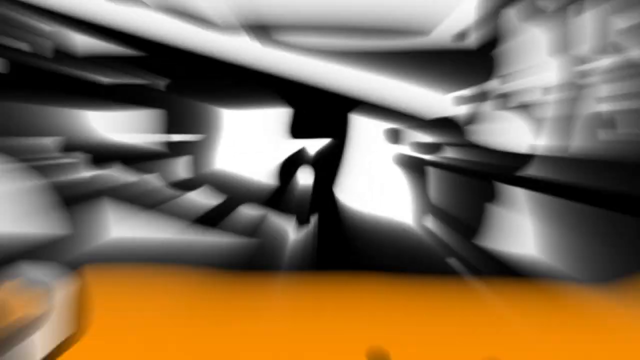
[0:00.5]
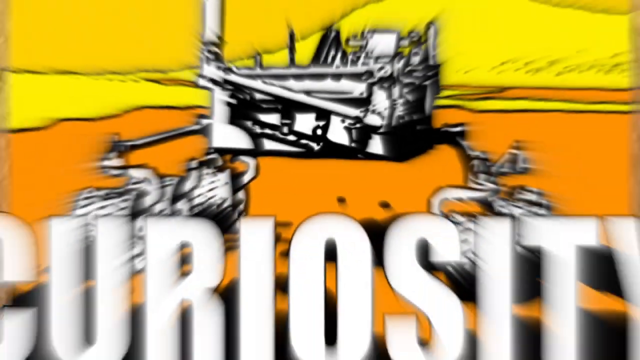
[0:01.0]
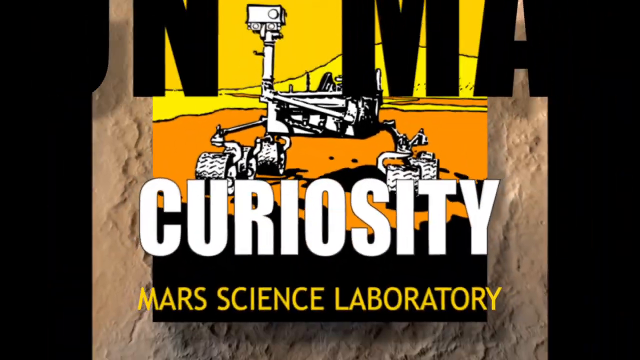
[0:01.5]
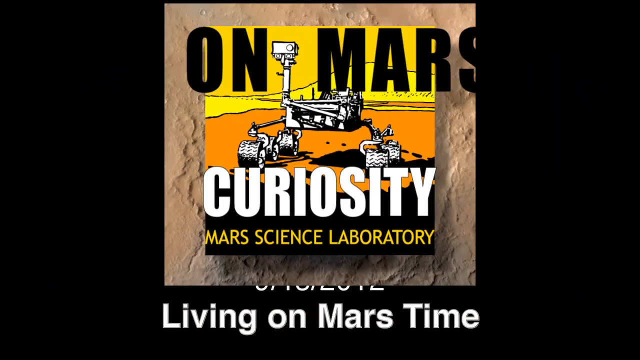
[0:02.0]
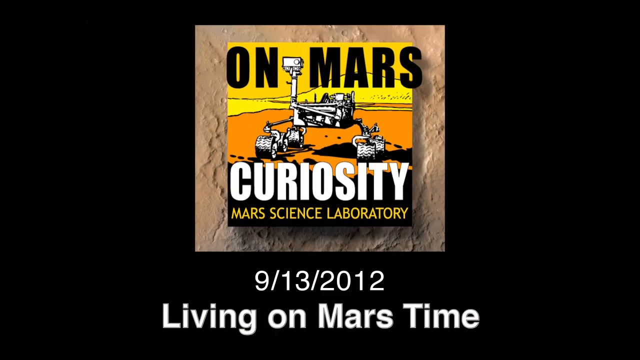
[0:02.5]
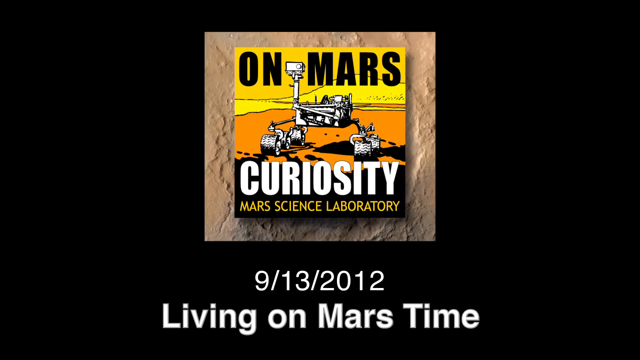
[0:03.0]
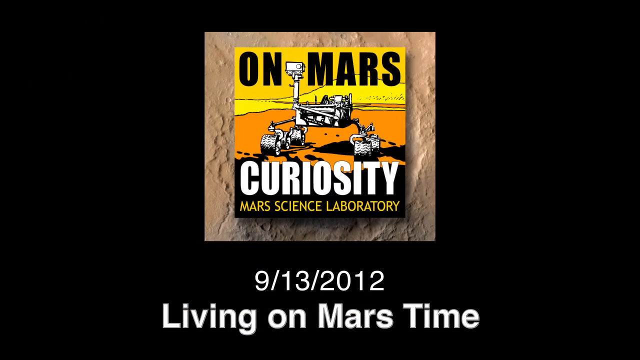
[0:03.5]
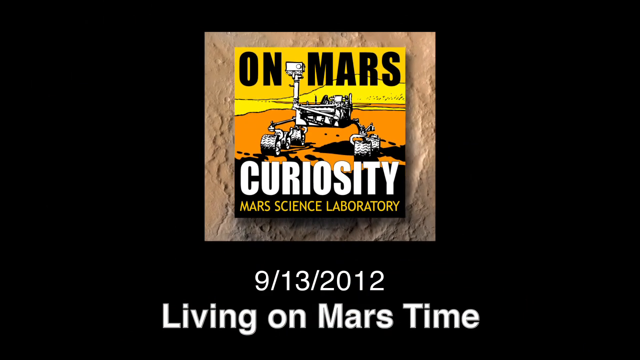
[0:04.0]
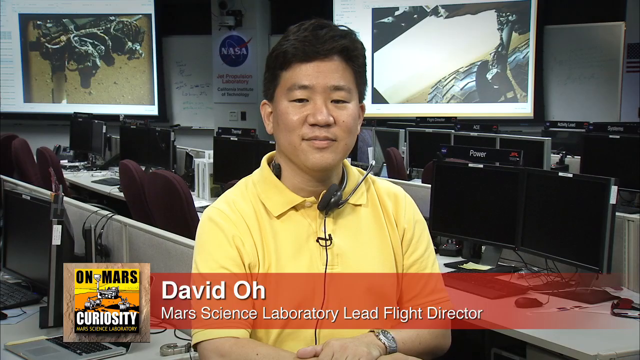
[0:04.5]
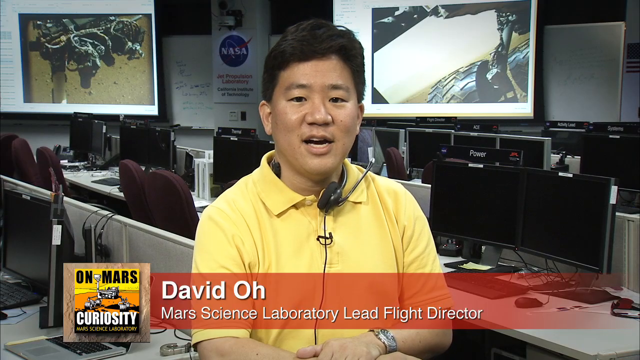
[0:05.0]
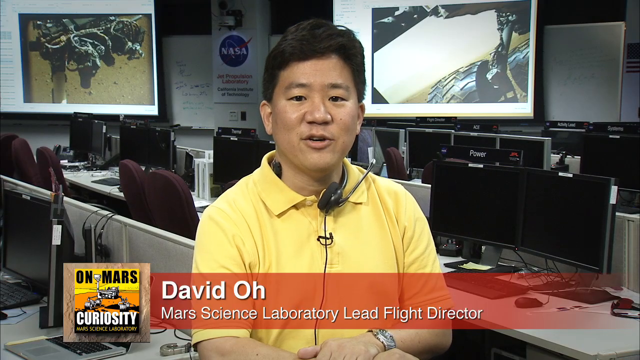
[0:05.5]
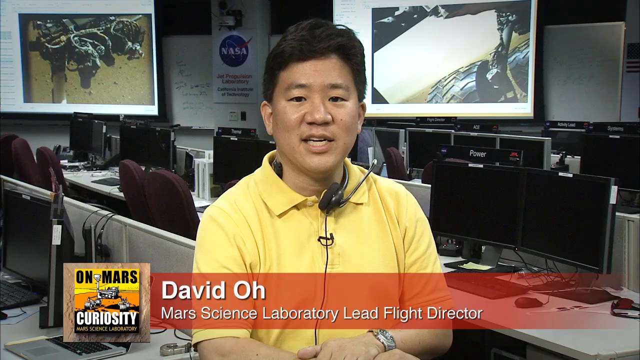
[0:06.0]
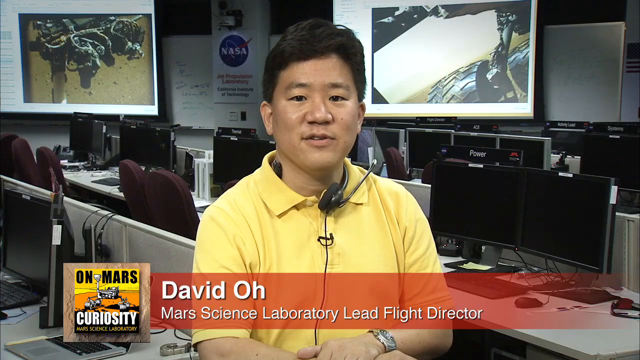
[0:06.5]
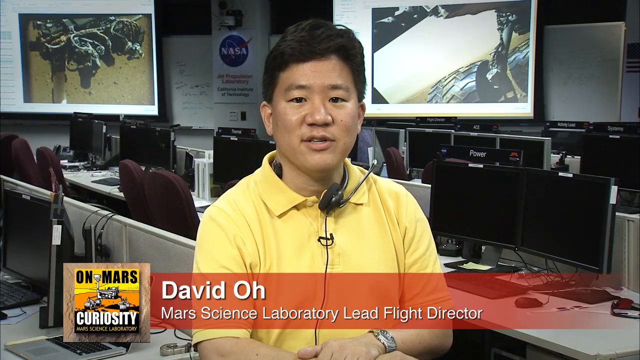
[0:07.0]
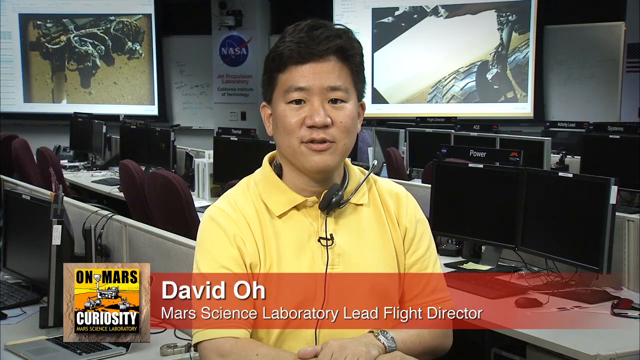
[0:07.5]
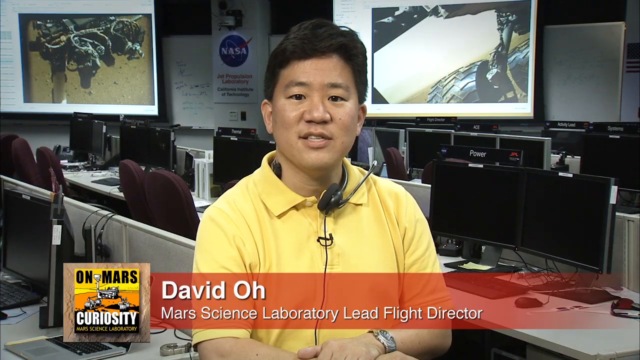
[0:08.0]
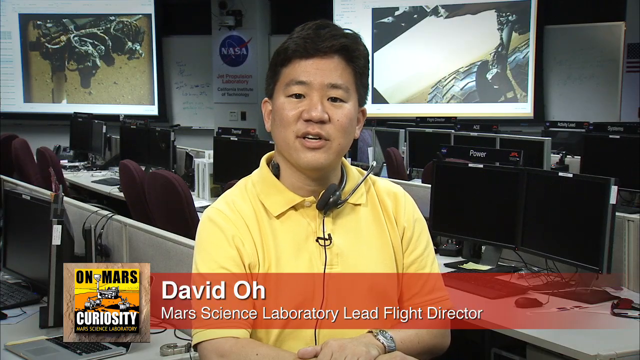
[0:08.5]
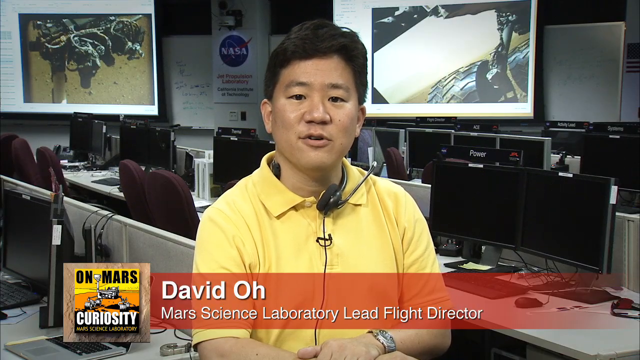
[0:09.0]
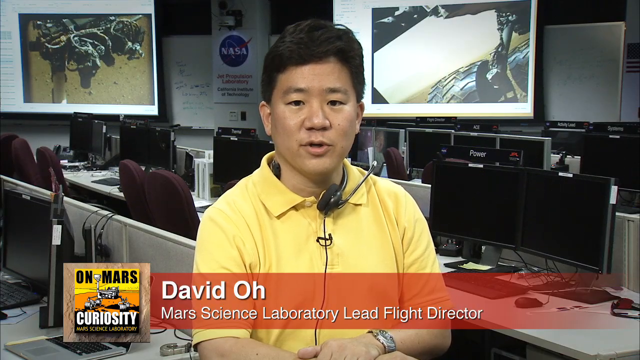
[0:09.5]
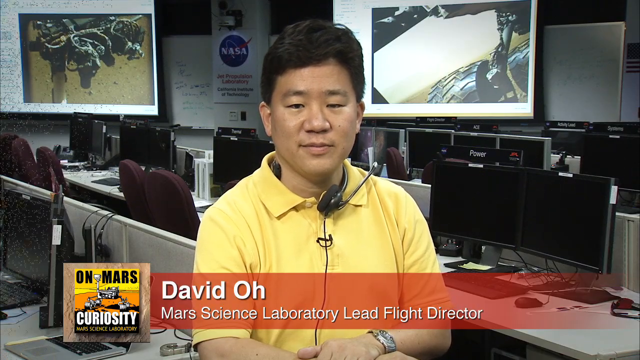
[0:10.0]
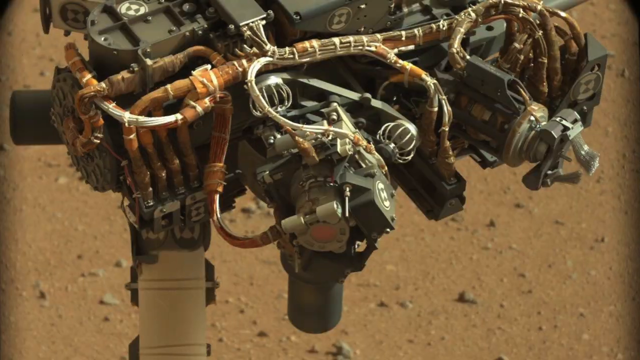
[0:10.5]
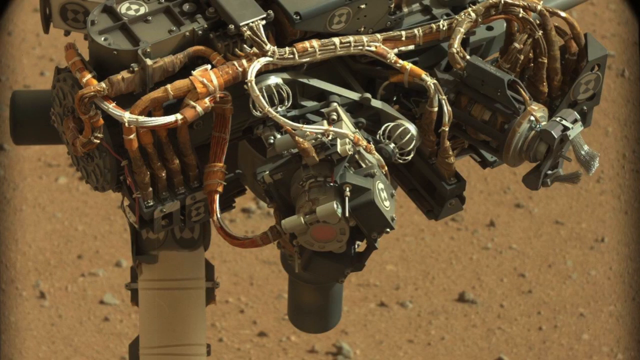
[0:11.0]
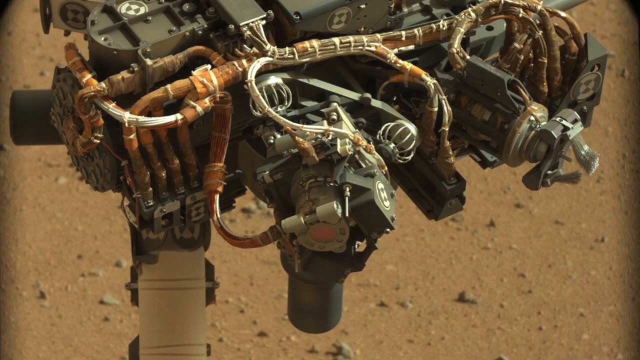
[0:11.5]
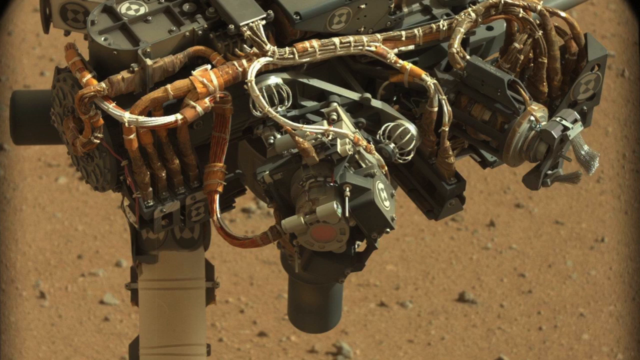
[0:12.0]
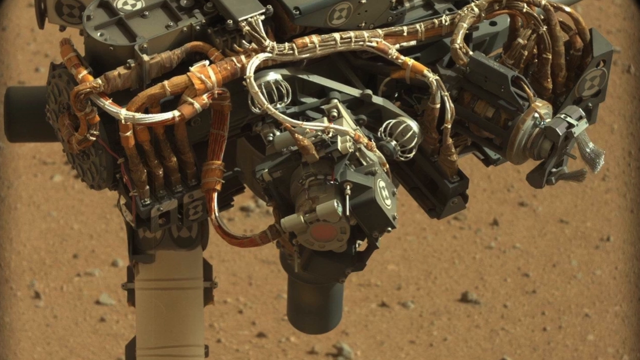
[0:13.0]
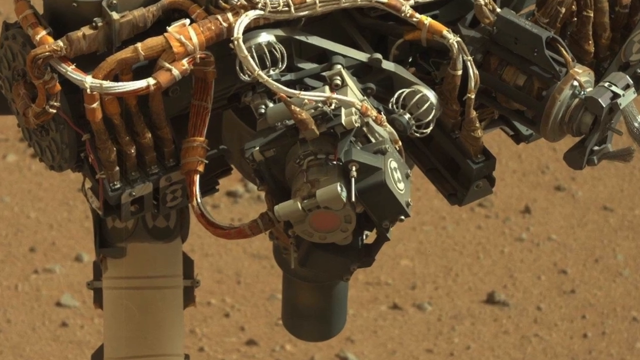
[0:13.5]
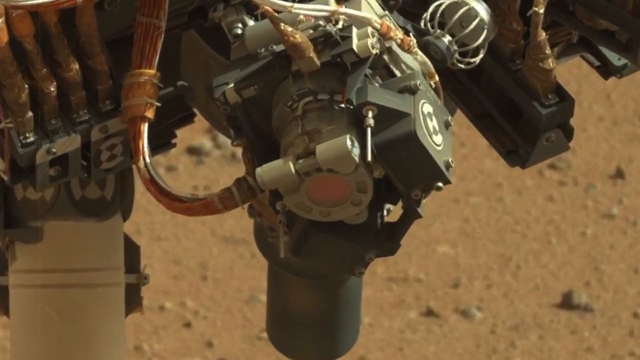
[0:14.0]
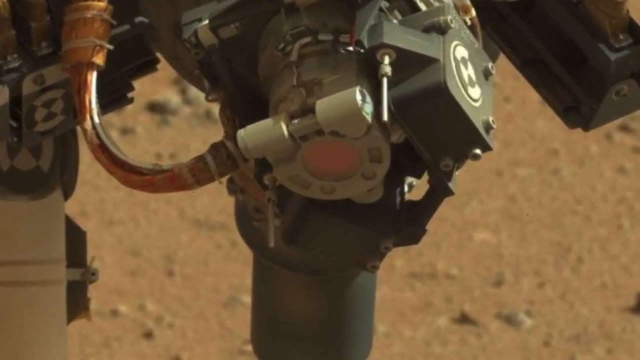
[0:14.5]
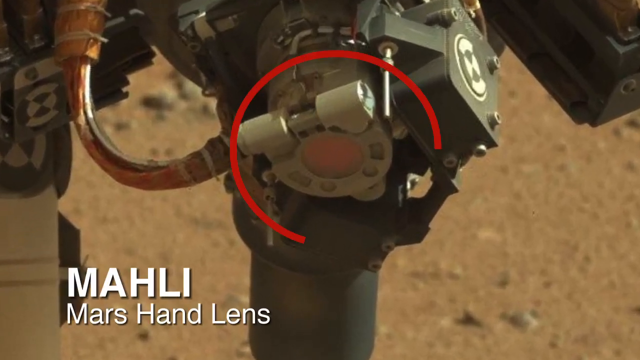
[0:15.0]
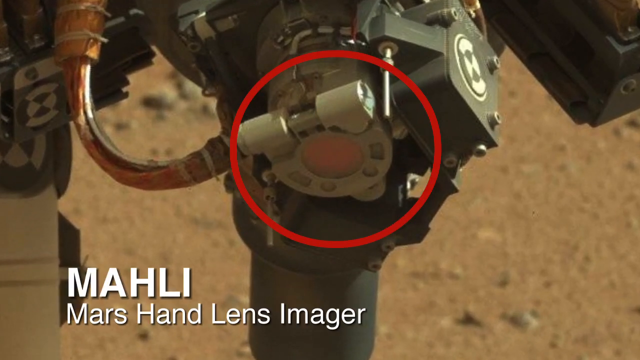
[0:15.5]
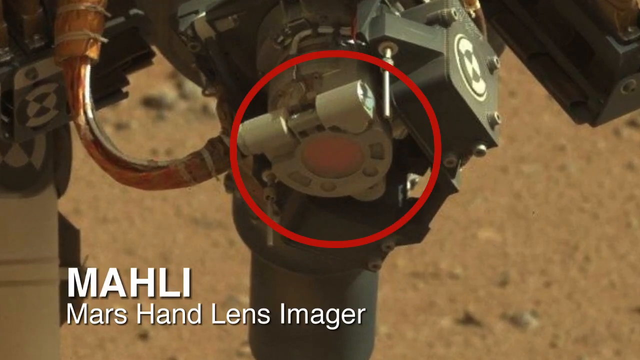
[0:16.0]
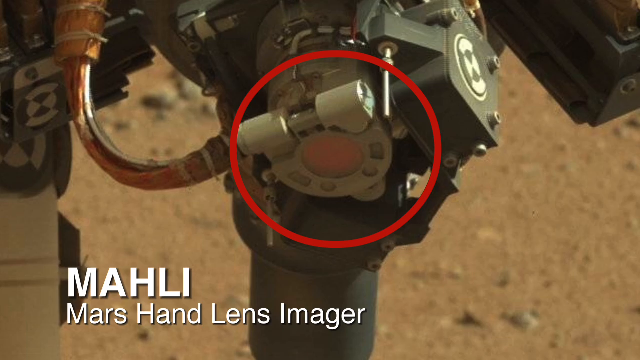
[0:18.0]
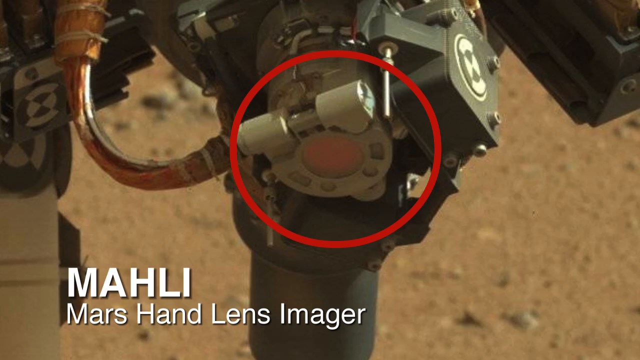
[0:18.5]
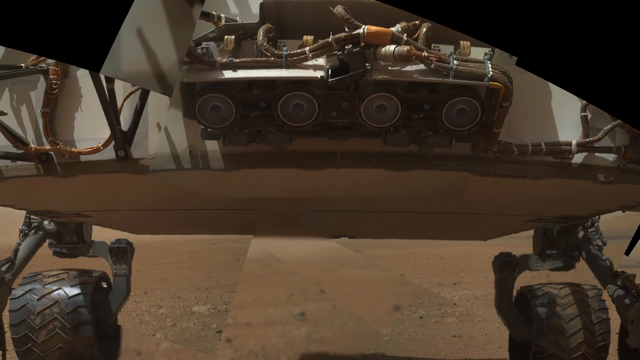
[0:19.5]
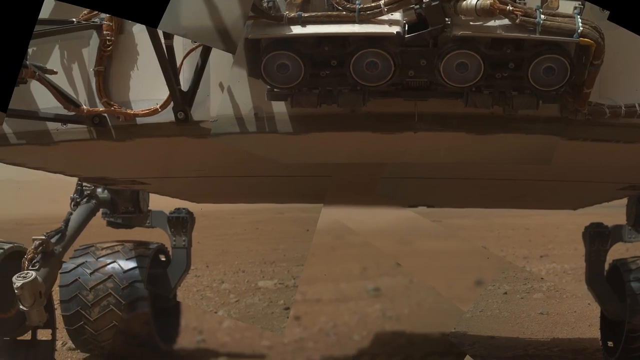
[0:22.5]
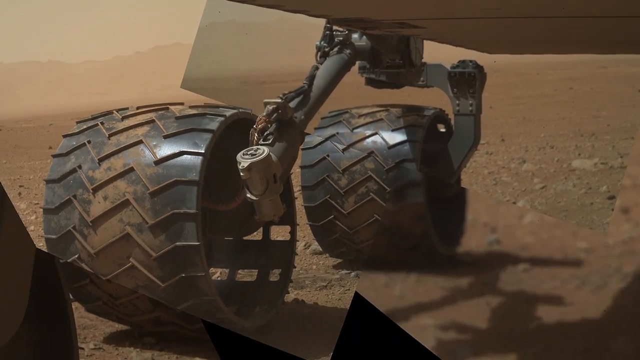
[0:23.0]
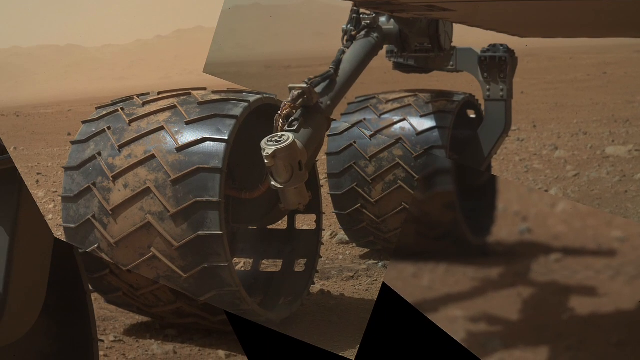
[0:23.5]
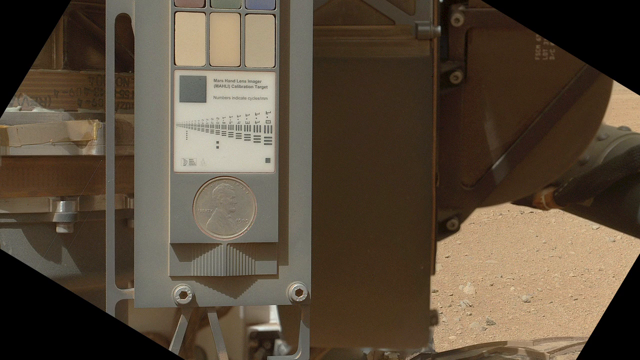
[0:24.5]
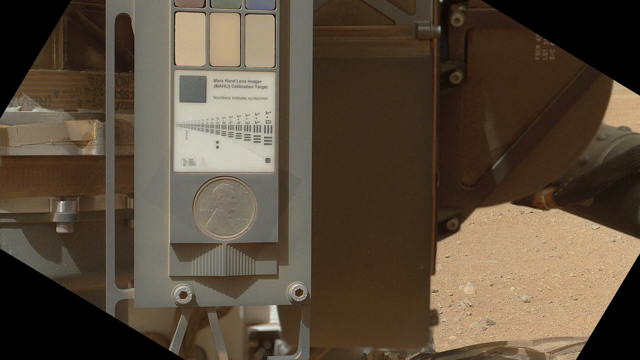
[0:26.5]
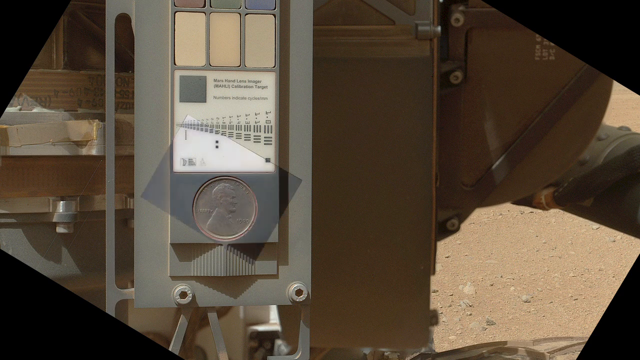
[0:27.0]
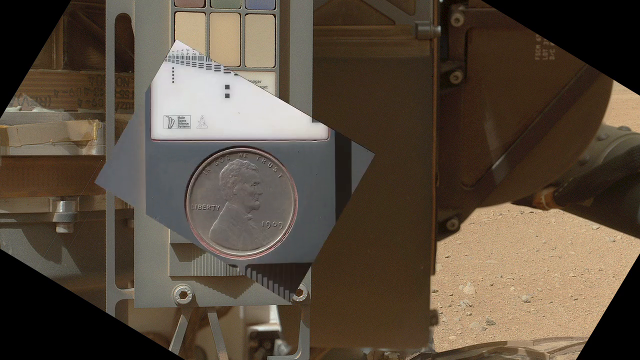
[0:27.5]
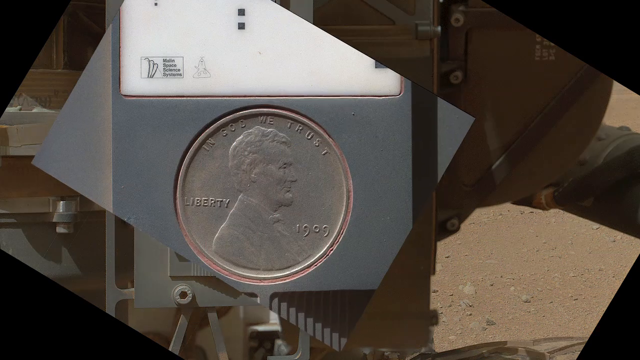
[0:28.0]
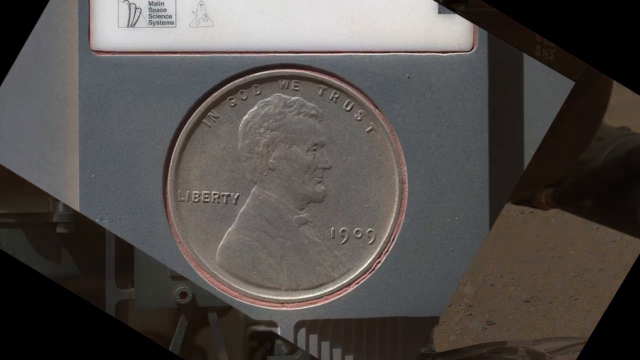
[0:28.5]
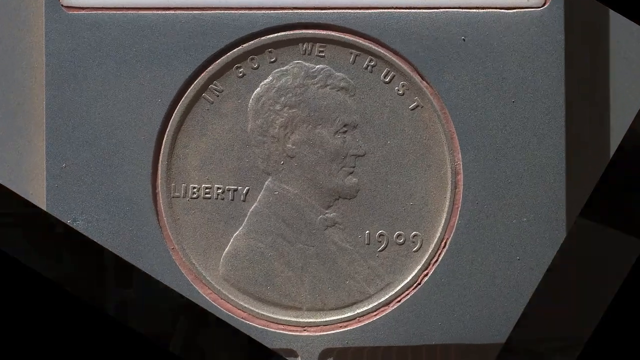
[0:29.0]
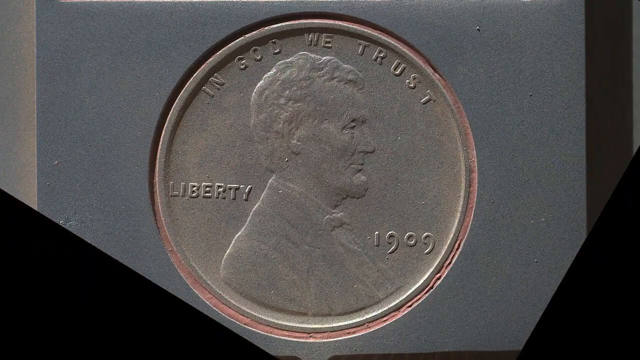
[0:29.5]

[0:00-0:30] The camera zooms out from a graphic on a black background. There is a round square that looks like the surface of a planet, and inserted into it is a yellow, orange, and black drawing that reads "On Mars, Curiosity, Mars Science Laboratory." In its center is a black and white illustration of the Curiosity rover. Beneath the image, in white, is "9/13/2012," and below that, in larger white letters, "Living on Mars Time." The scene switches to an Asian man in a yellow crew neck polo with headphones around his neck and a microphone clipped to his shirt. Orange text below him reads "David Oh, Mars Science Laboratory Lead Flight Director." Two computer screens are visible behind him, with a NASA logo in the center on the wall. He speaks to the camera for a moment. Next comes a close-up of the Curiosity rover, an intricate machine of tubing, pipes, gears, and metal. The camera moves in and circles an area the text labels "Molly, Mars Hand Lens Imager," a camera on the probe. The view then switches to the front of the probe, where several cameras are mounted, and looks at the large tires with three treads. A panel follows with a Lincoln head penny inserted in it; the penny is from 1909 and shows Abraham Lincoln and the words "In God We Trust."